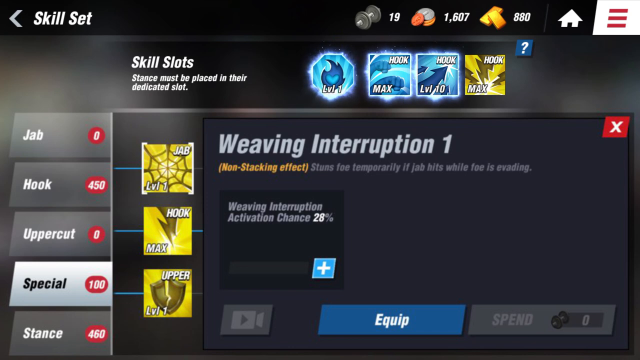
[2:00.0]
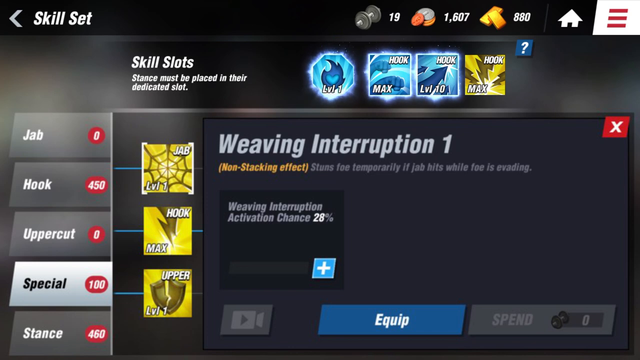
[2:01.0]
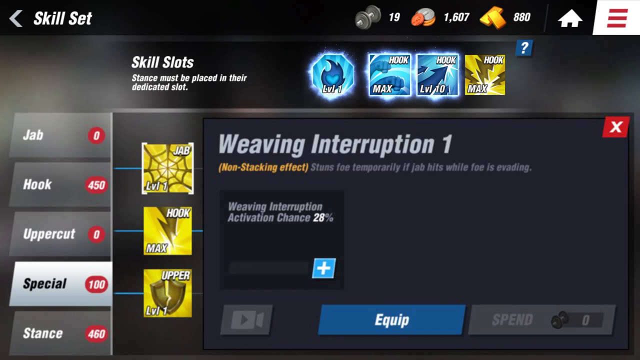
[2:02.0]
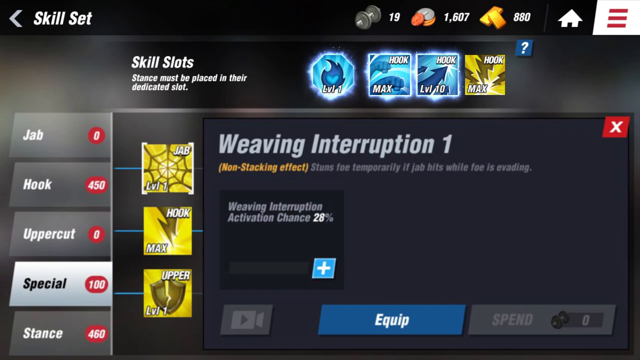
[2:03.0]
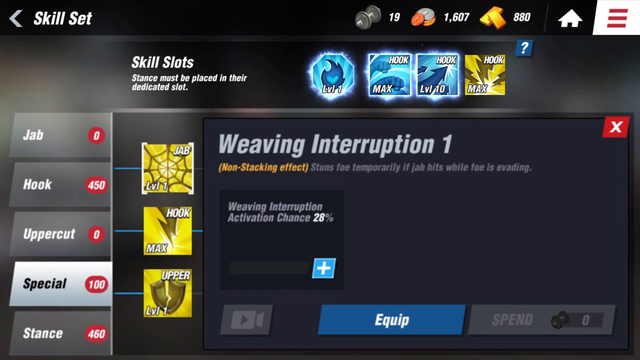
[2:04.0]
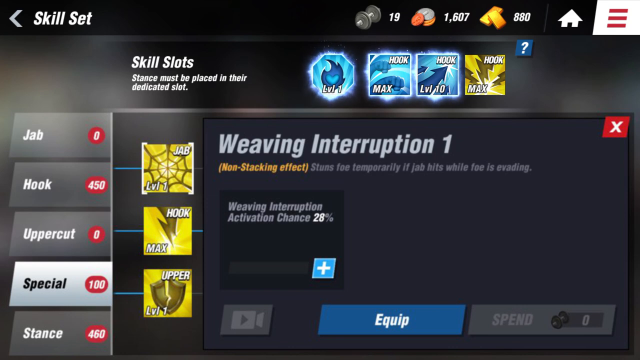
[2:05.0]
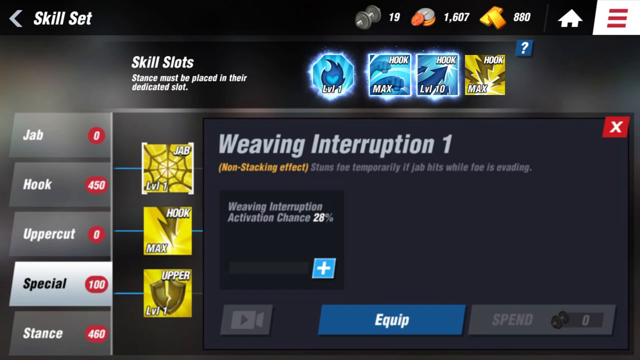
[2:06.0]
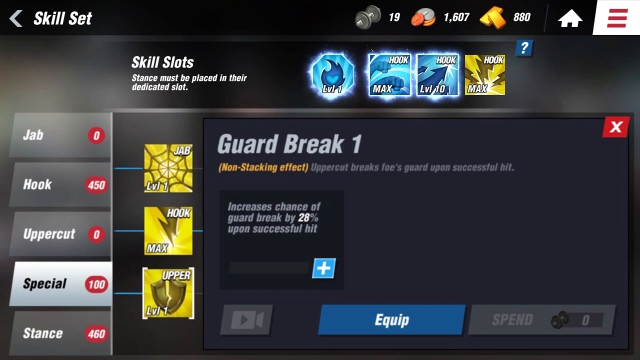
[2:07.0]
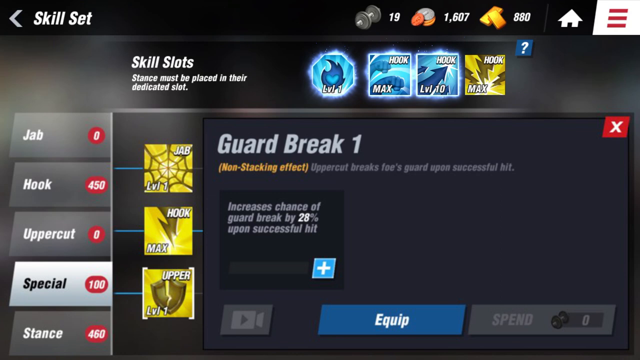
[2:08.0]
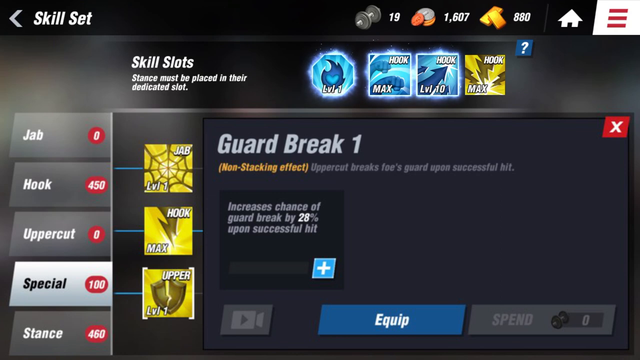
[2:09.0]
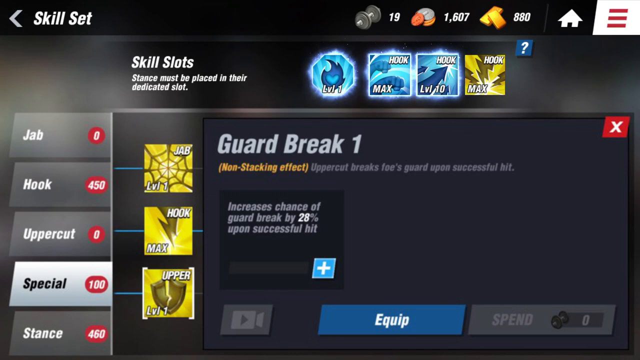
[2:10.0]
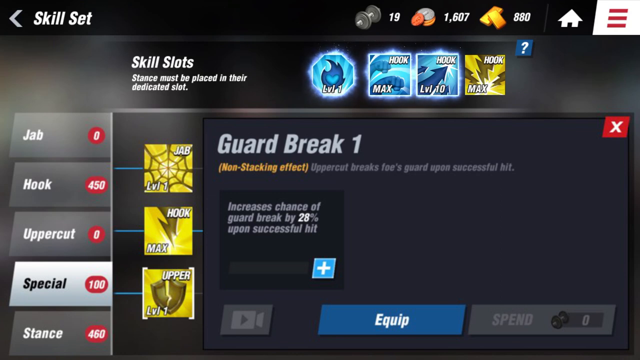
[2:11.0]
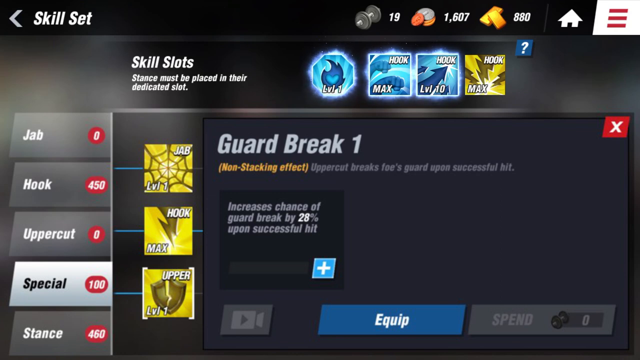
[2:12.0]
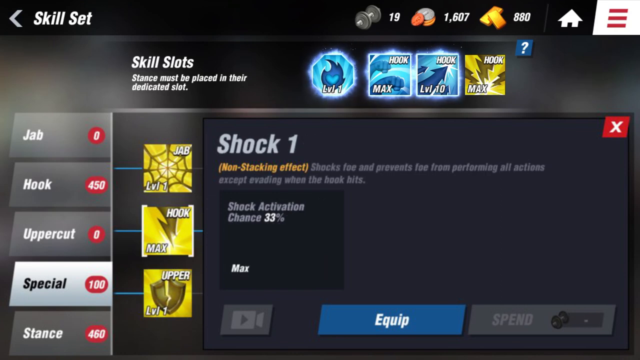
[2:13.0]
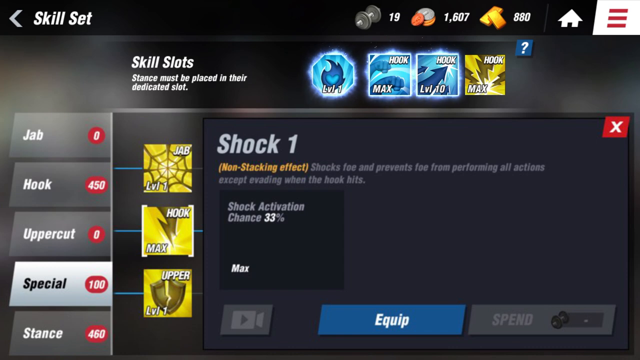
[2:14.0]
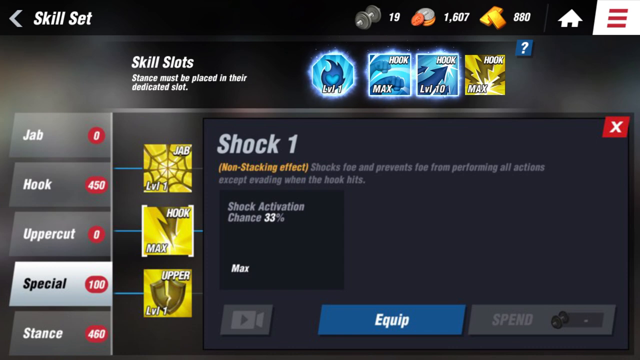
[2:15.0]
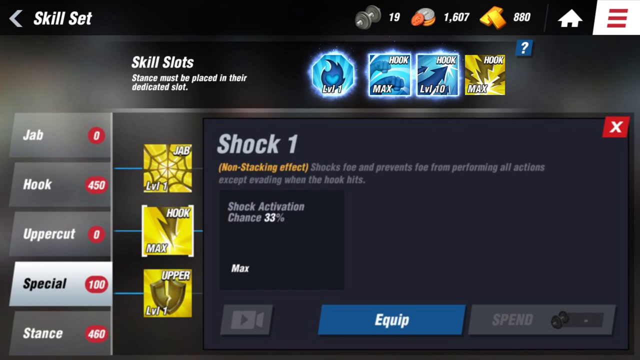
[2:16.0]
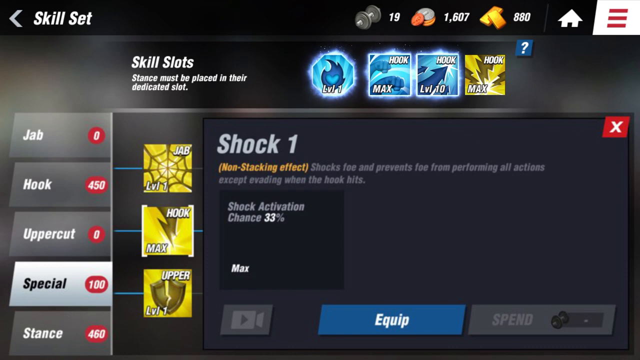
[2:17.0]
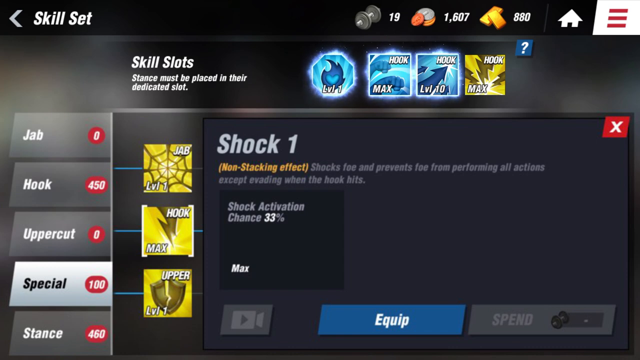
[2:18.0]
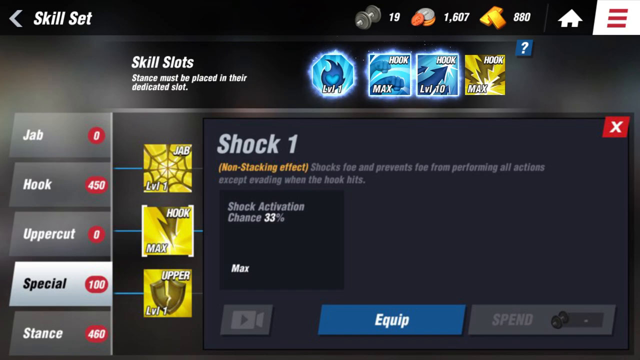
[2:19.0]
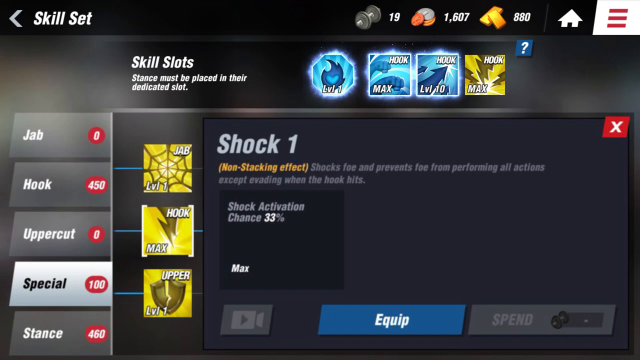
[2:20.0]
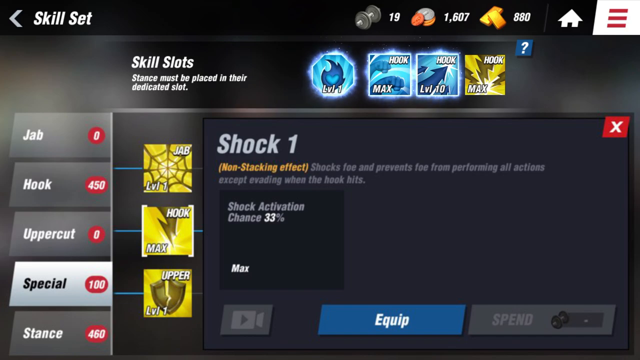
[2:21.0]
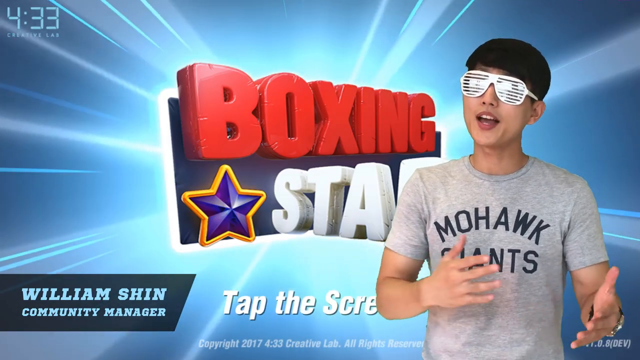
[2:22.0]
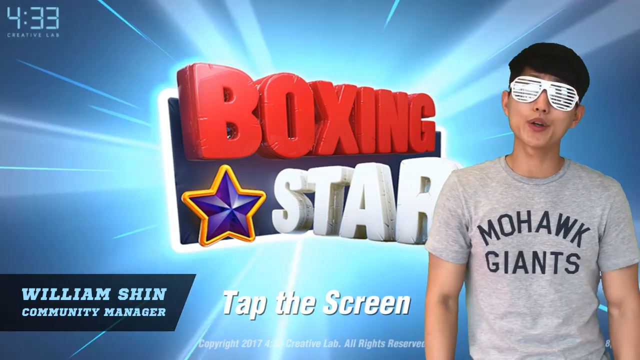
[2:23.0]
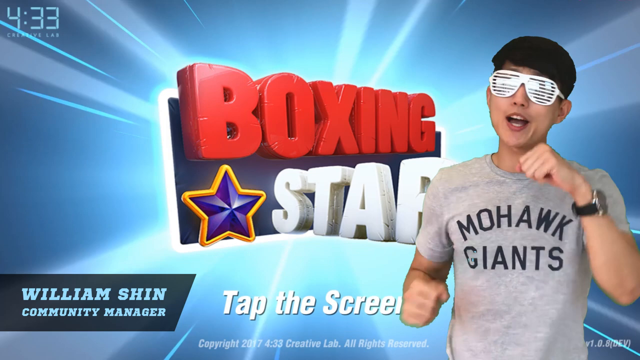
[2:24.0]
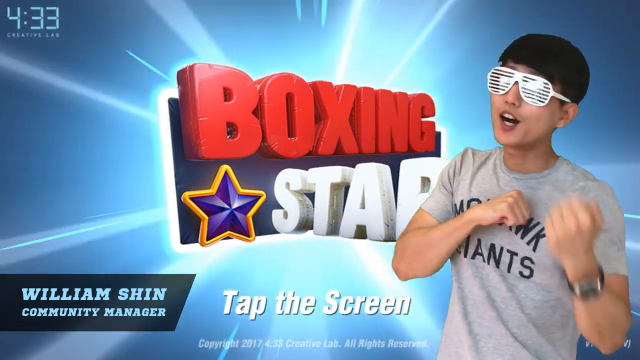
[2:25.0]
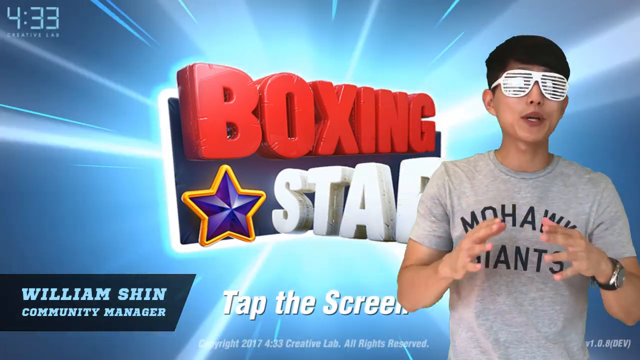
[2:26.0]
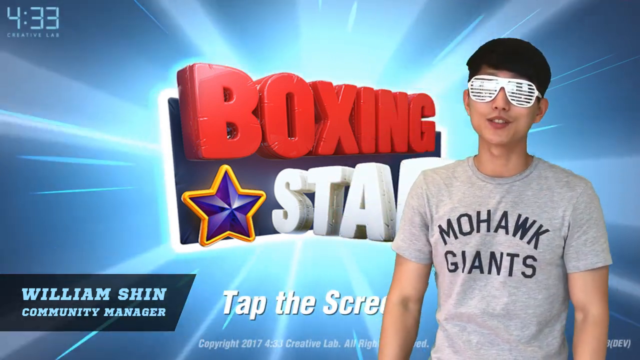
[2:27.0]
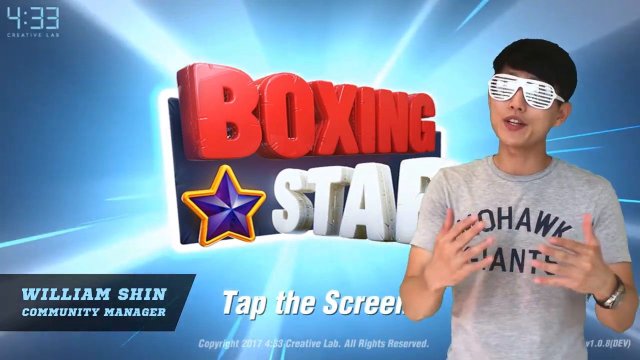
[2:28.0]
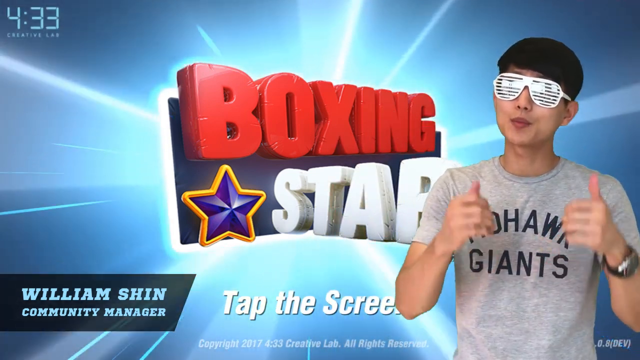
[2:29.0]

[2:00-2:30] The skill set still shows "weaving interruption one" with its non-stacking effect, then "shock one": "shocks foe and prevents foe from performing all actions except evading when the hook hits" and "shock activation chance 33%". The video then returns to William in front of the boxing star background. He makes boxing fists as he talks, throwing an uppercut and a punch from the right-hand side with his right hand. He then gives a thumbs up and points down below, in a subscribe-below kind of motion.